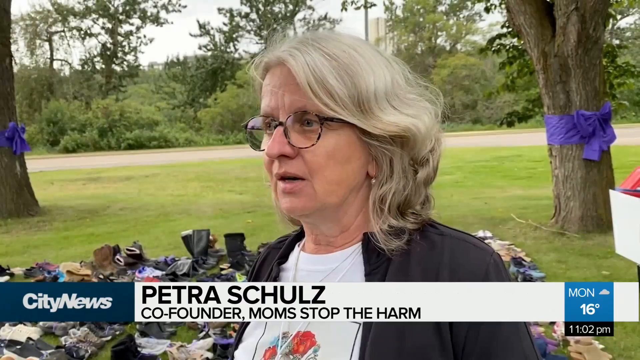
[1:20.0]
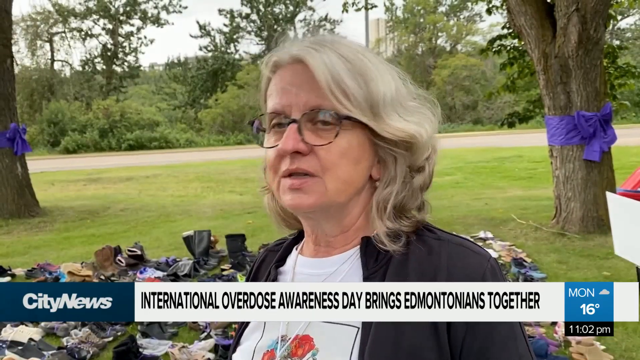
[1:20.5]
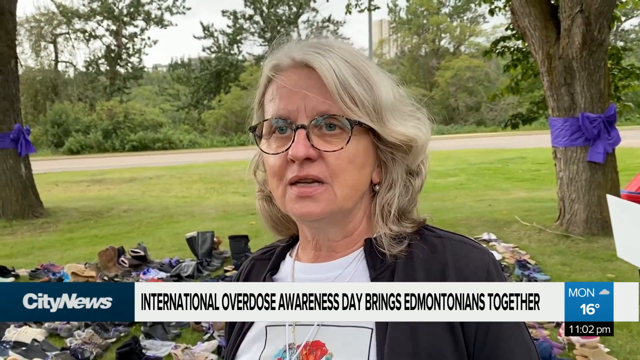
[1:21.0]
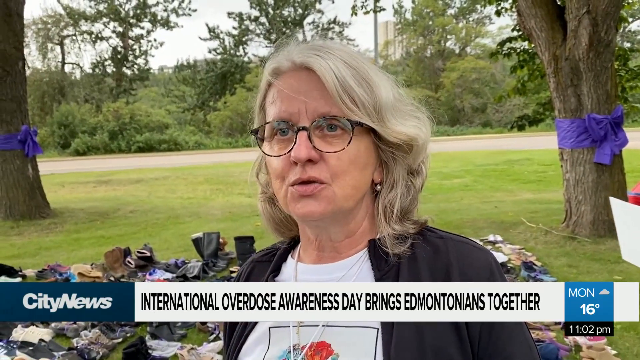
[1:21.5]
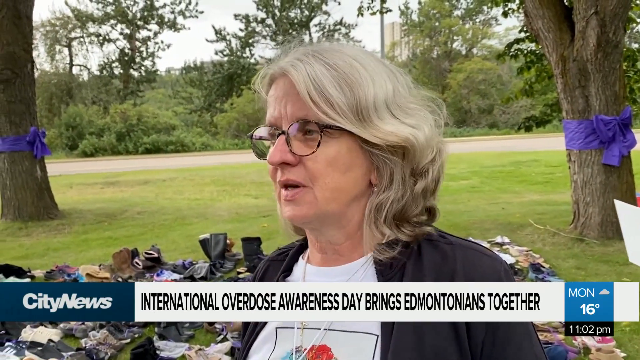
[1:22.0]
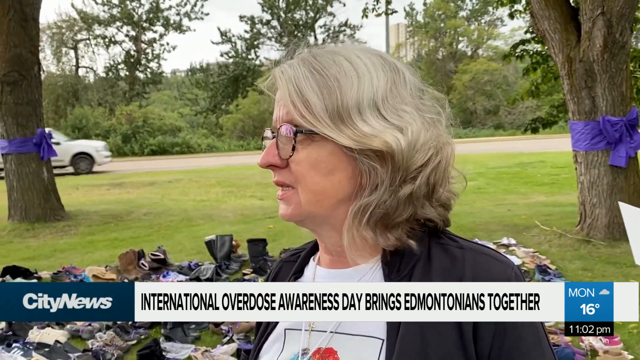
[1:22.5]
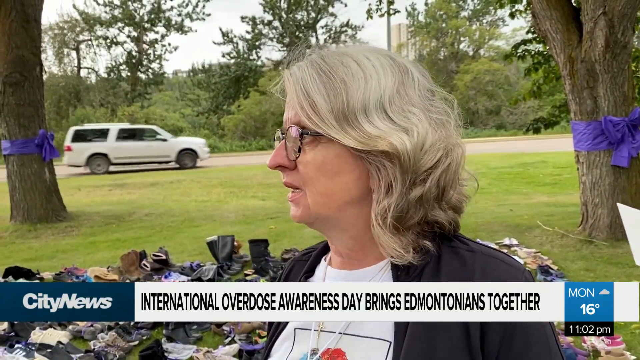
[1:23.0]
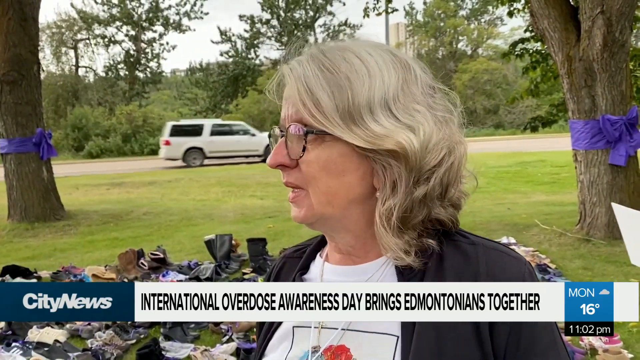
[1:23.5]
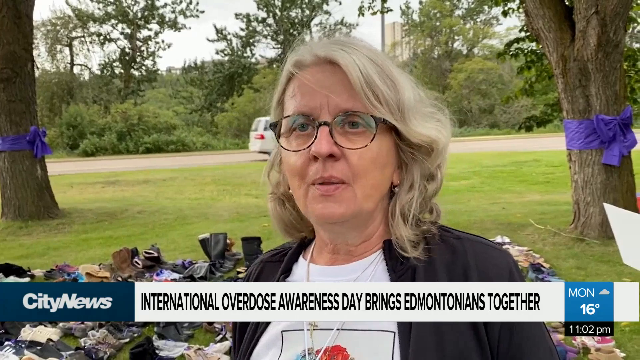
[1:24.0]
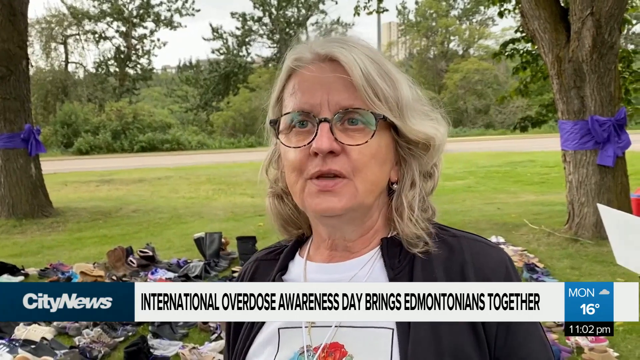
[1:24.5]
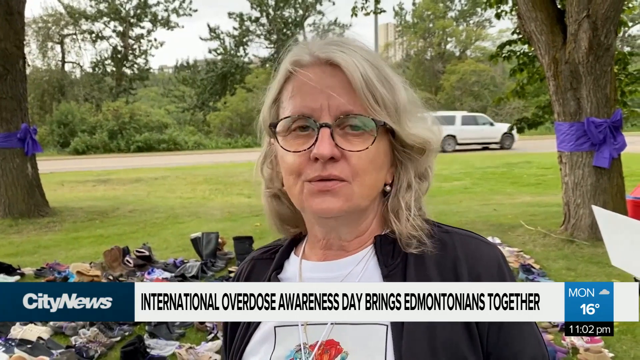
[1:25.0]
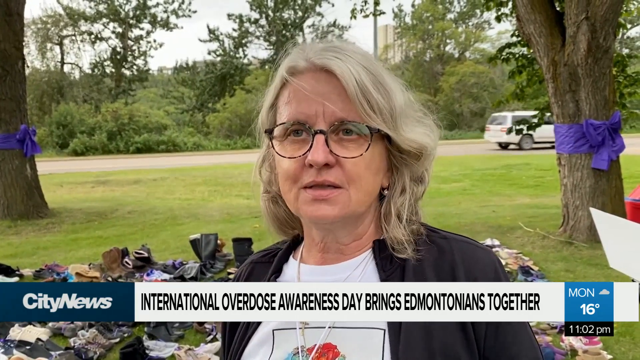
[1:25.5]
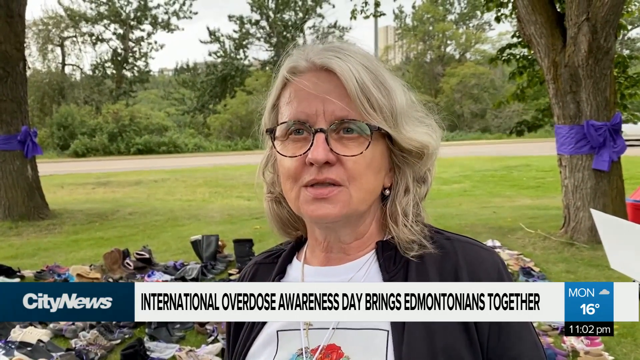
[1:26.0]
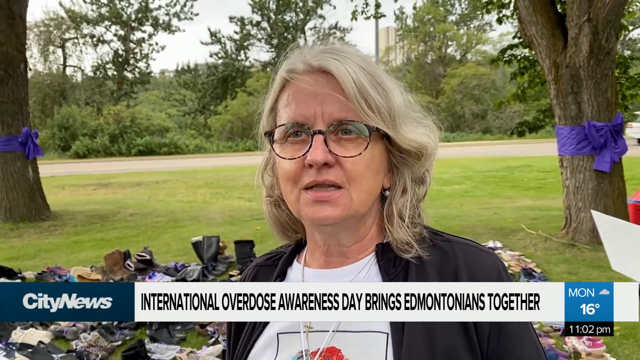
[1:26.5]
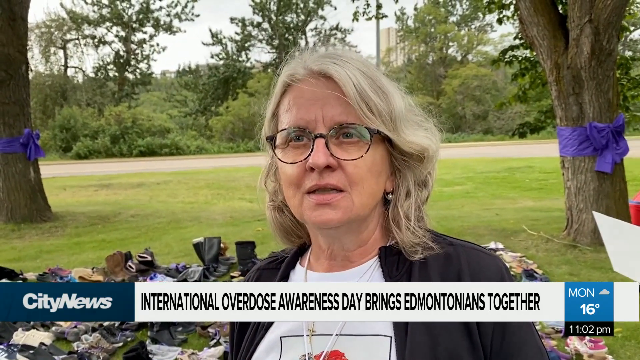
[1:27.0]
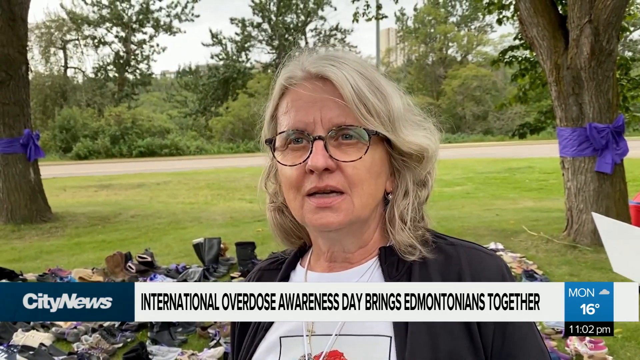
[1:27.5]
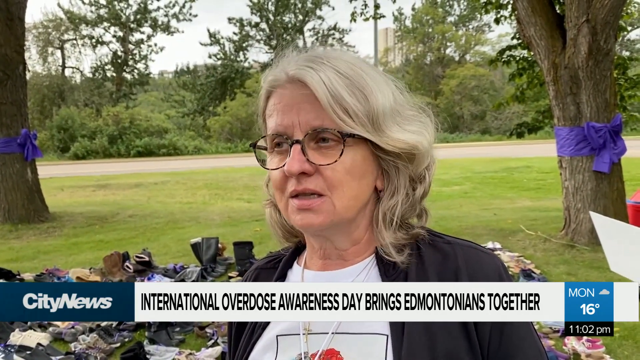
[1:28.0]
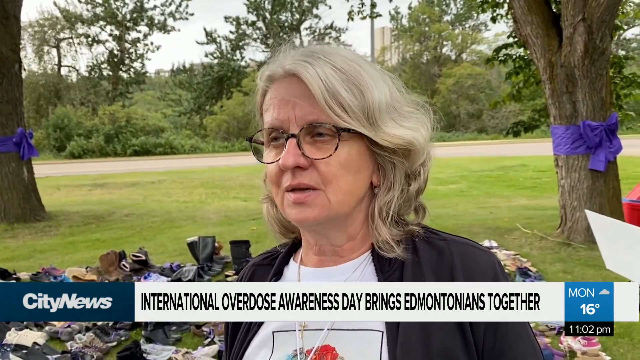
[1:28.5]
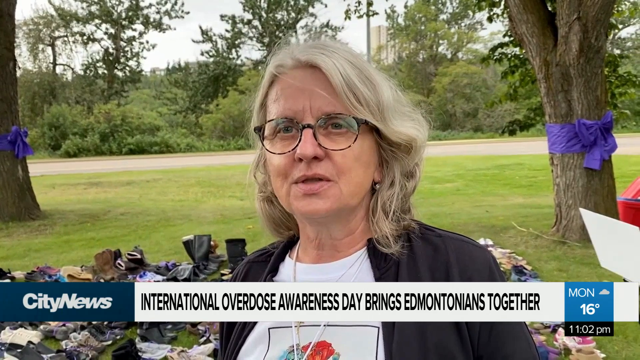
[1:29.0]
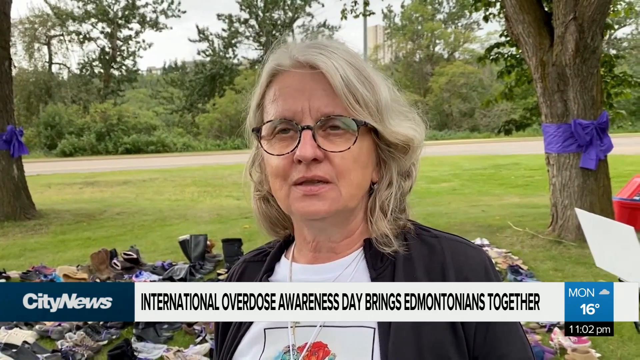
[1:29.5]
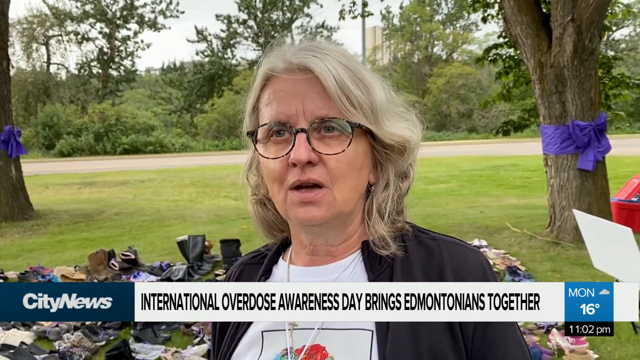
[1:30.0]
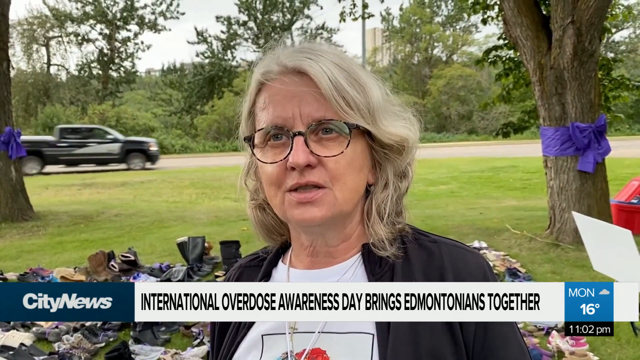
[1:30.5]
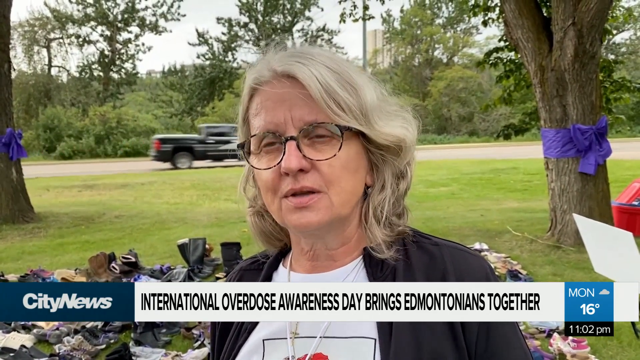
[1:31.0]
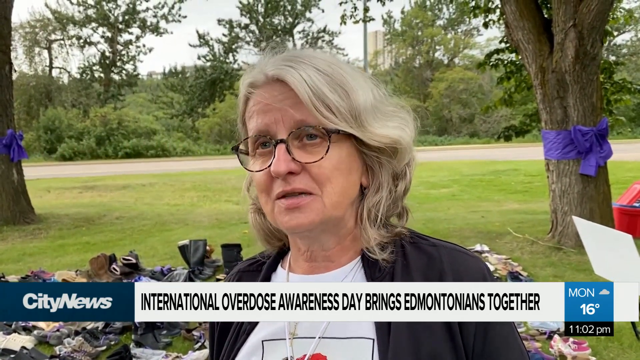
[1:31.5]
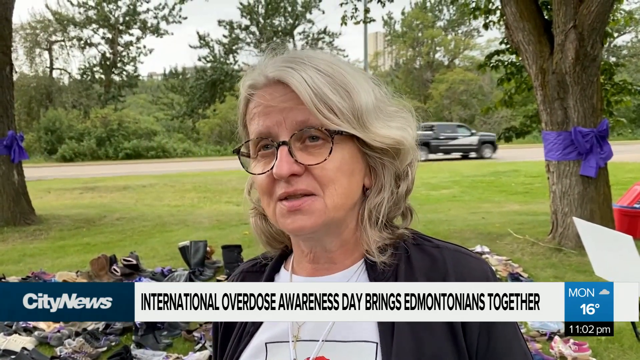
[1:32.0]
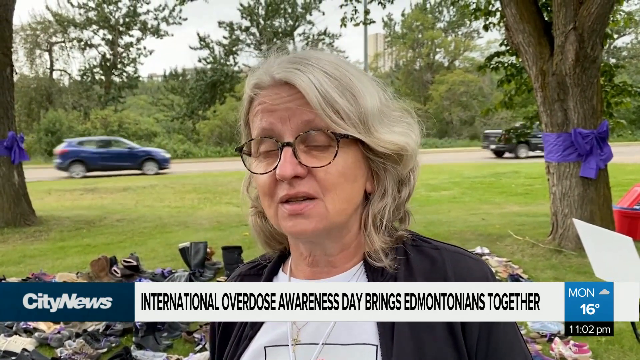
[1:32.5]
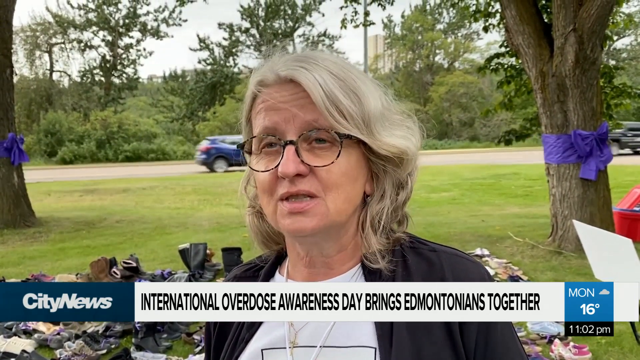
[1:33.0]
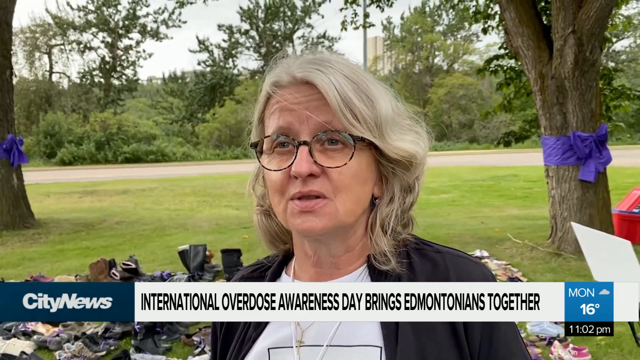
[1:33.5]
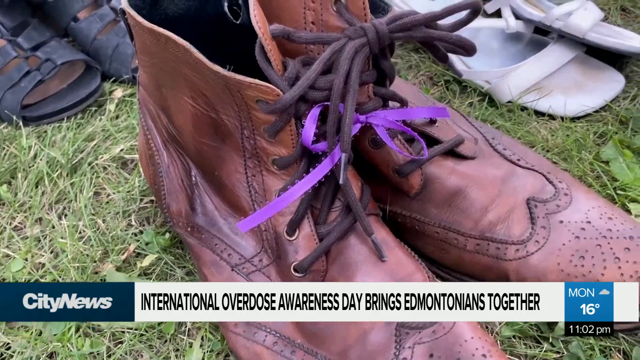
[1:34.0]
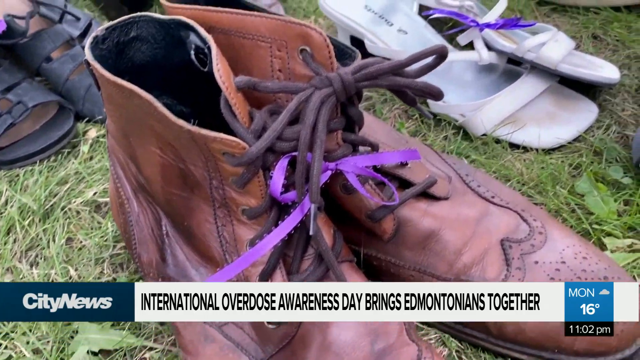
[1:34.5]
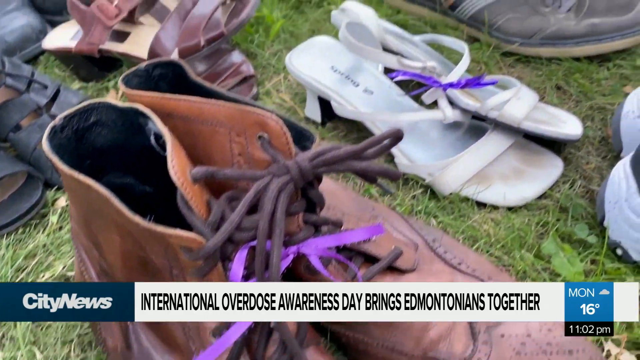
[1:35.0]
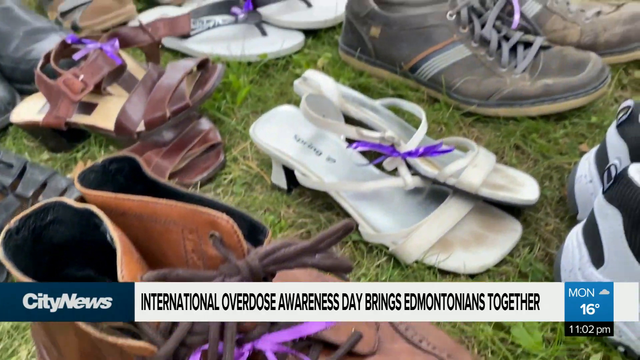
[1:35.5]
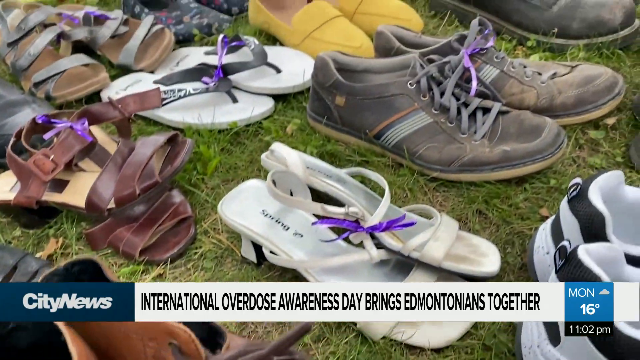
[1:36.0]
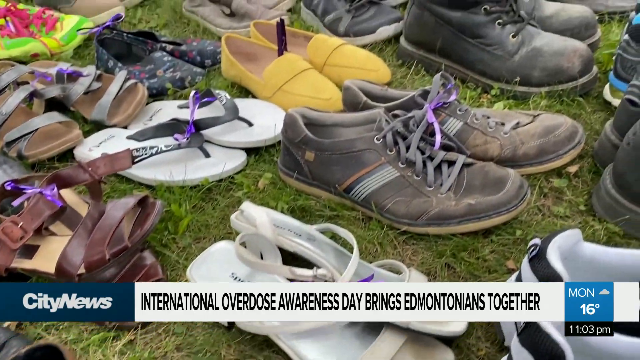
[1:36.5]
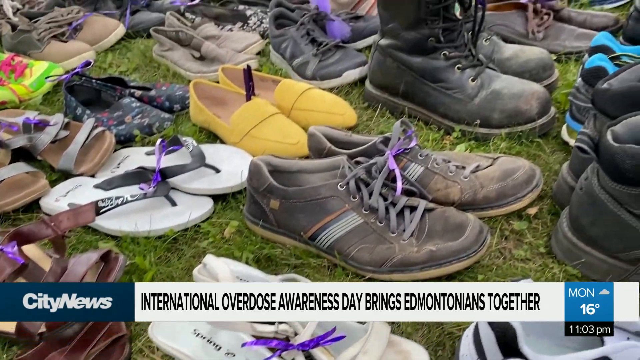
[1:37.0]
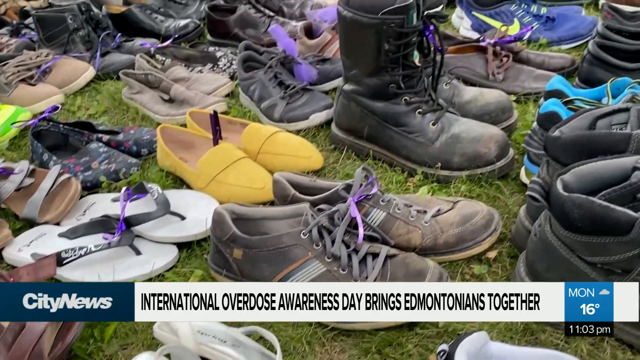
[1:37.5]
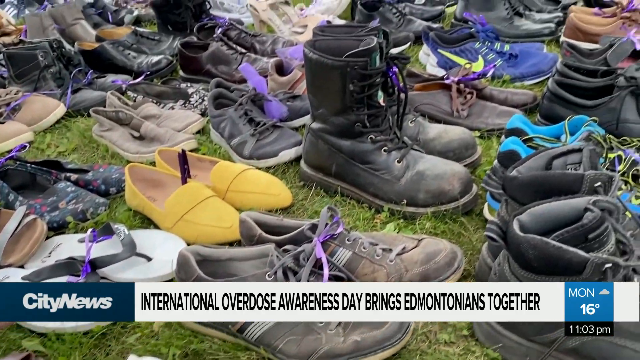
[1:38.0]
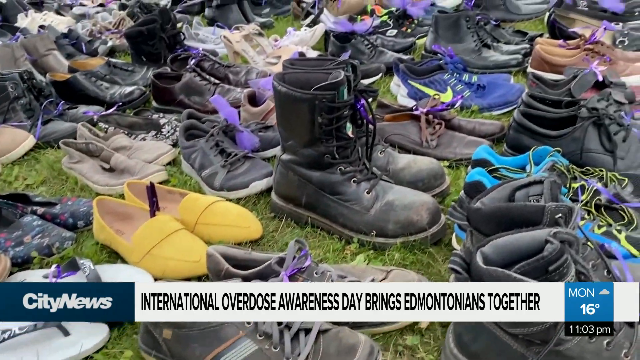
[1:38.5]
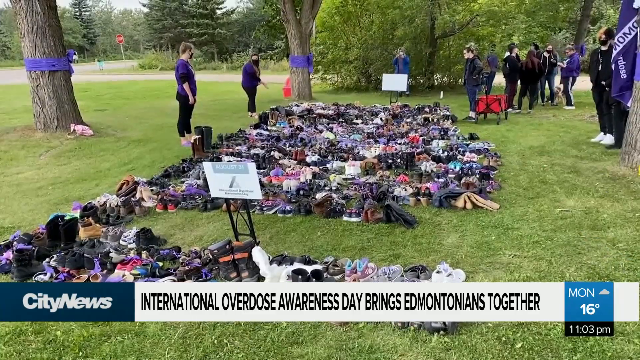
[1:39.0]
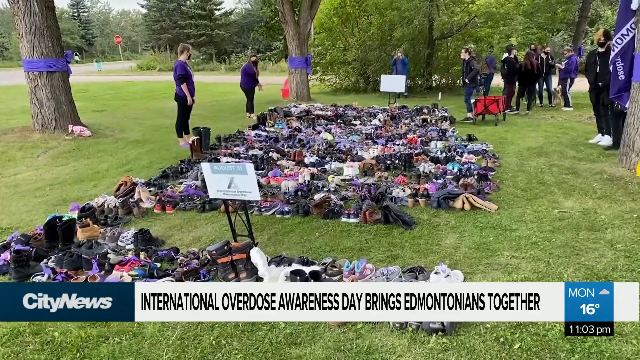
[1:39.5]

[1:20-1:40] A woman wearing a black jacket, a white t-shirt, a necklace and sunglasses talks to the camera, with the name "Petra Skal" displayed below. Behind her, shoes are put together on the ground, and purple clothes are tied on the trunk of a tree. There is a road behind where the woman is talking, and vehicles pass by. The camera moves to the shoes, which are of different colors and sizes; almost all of them have some pink color, possibly a piece of cloth tied on the shoes. Below the screen, City News is on the left side, and on the right side are the day, Monday, 15 degrees, and the time, 11:03 p.m.